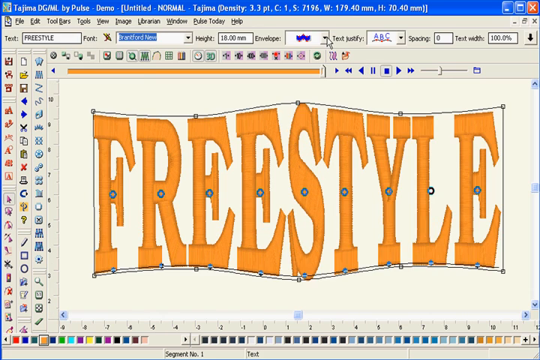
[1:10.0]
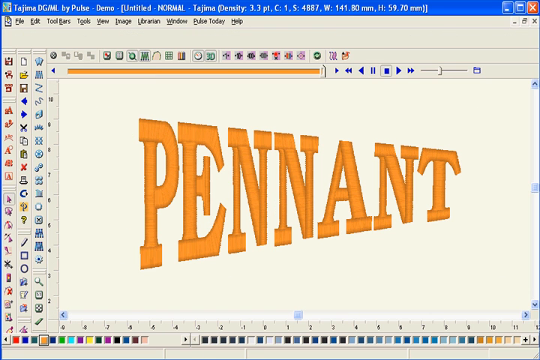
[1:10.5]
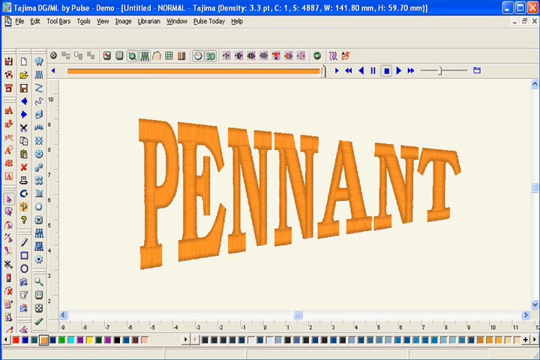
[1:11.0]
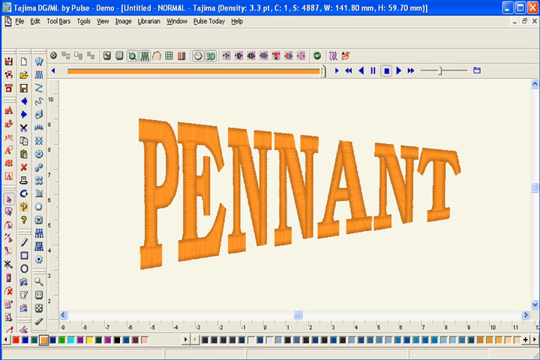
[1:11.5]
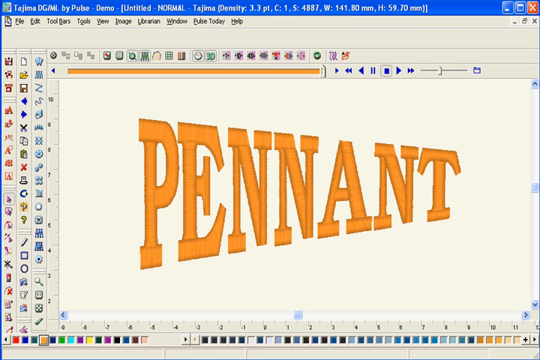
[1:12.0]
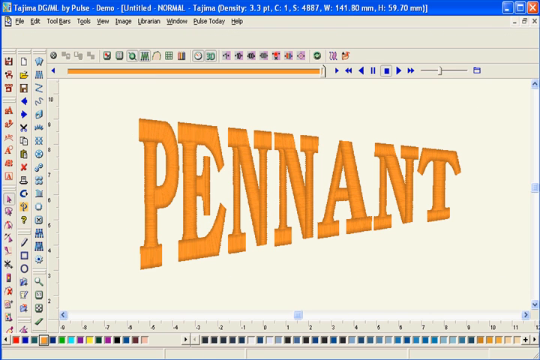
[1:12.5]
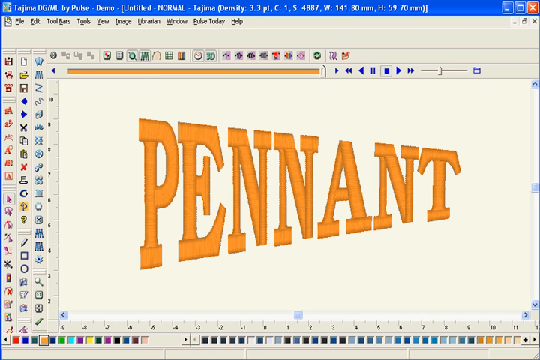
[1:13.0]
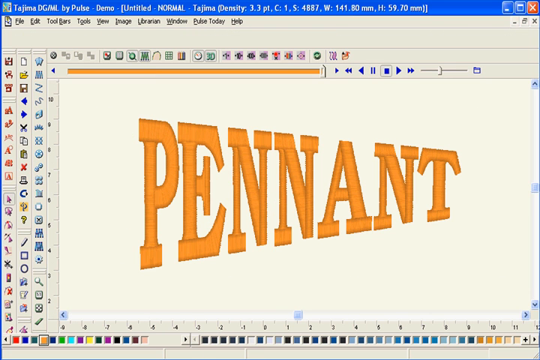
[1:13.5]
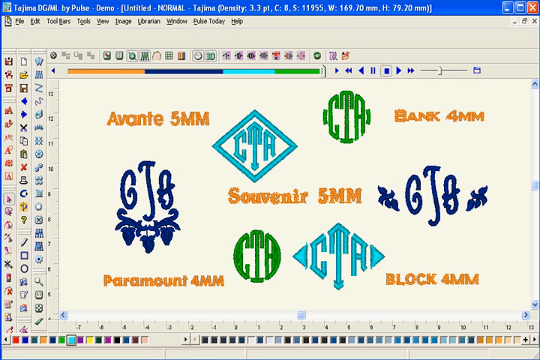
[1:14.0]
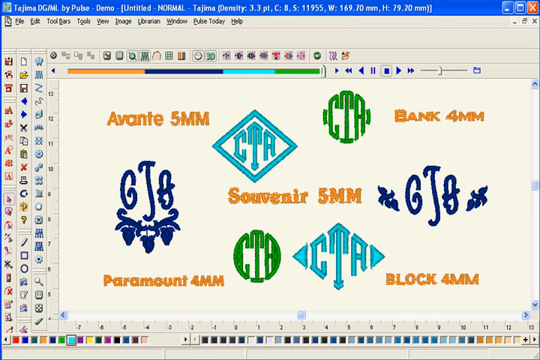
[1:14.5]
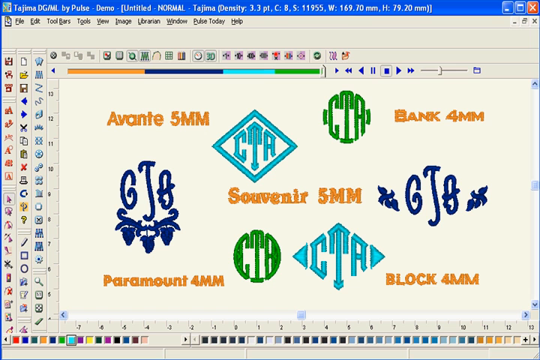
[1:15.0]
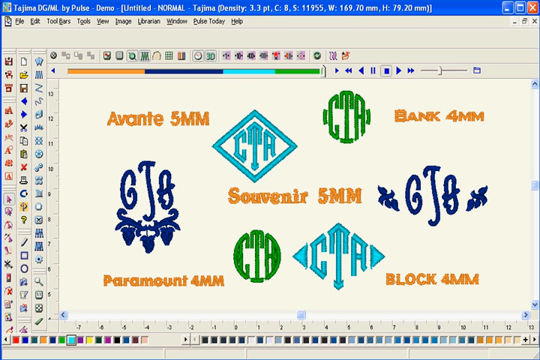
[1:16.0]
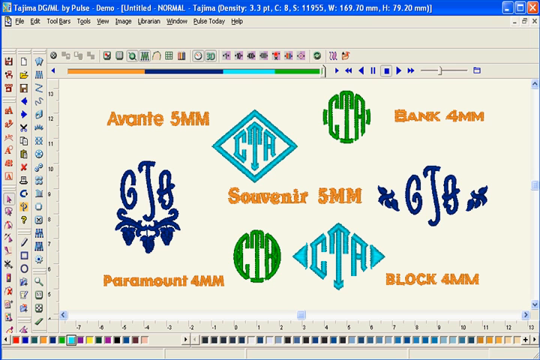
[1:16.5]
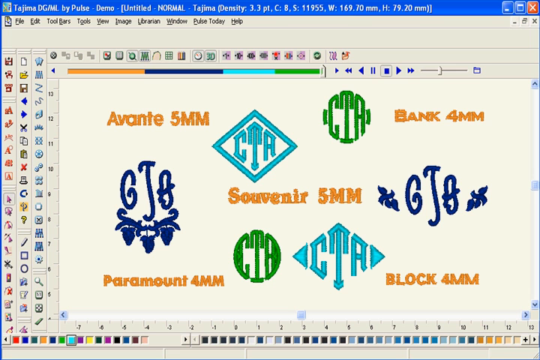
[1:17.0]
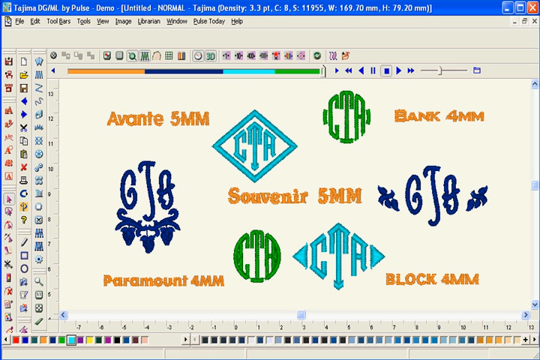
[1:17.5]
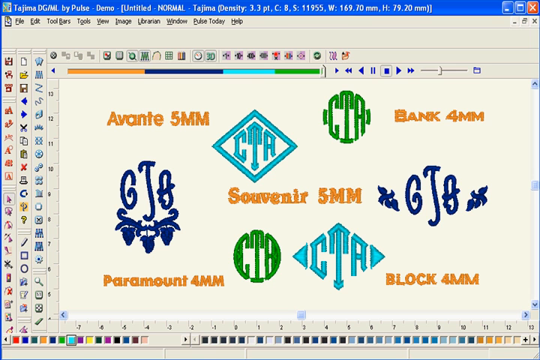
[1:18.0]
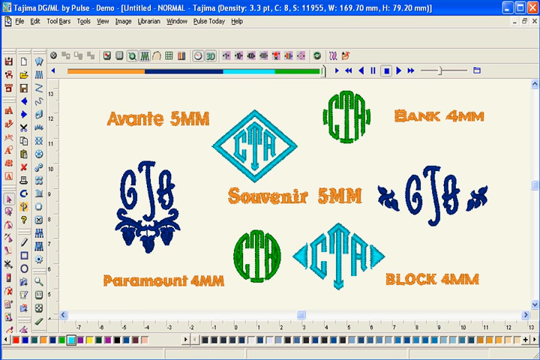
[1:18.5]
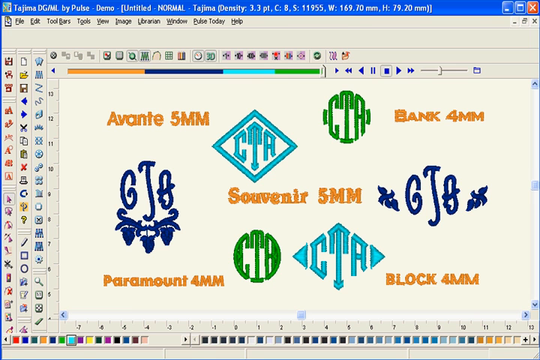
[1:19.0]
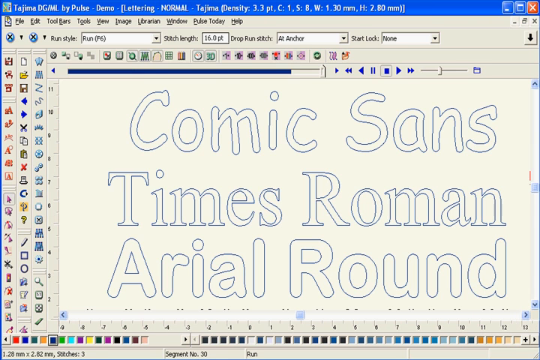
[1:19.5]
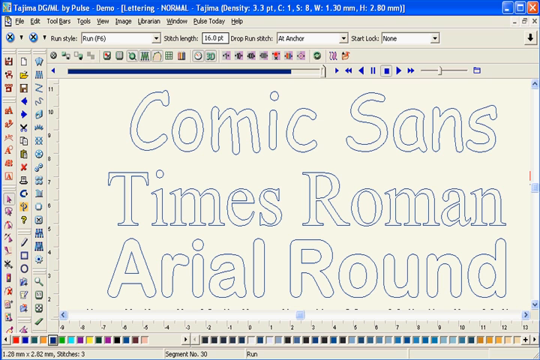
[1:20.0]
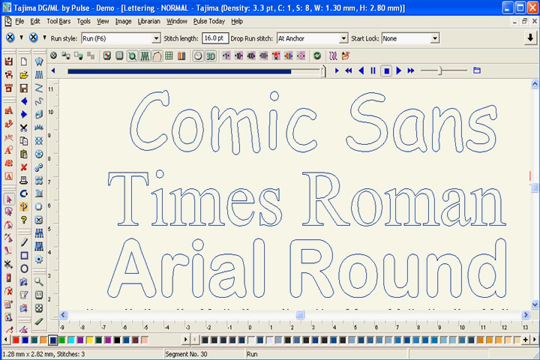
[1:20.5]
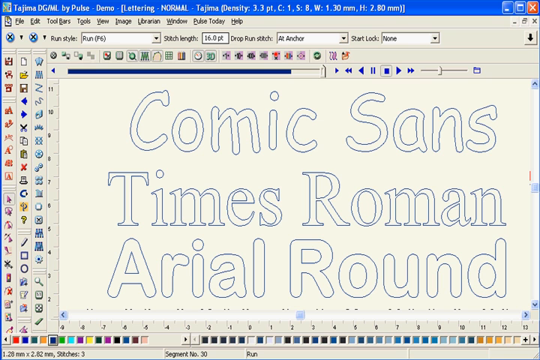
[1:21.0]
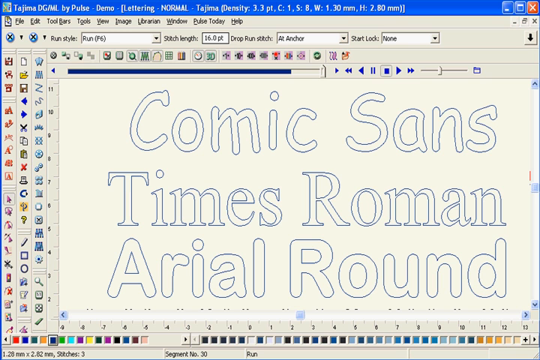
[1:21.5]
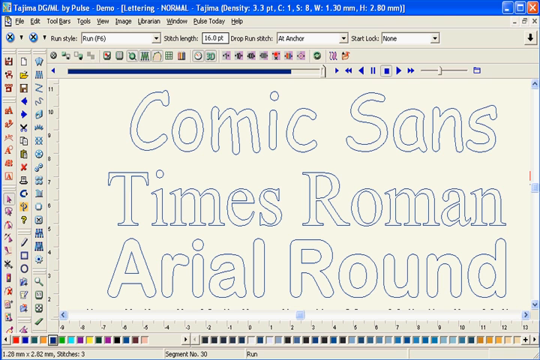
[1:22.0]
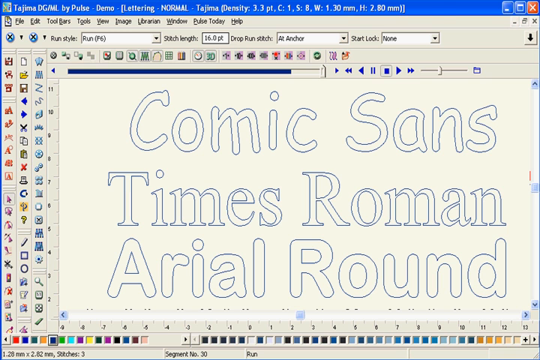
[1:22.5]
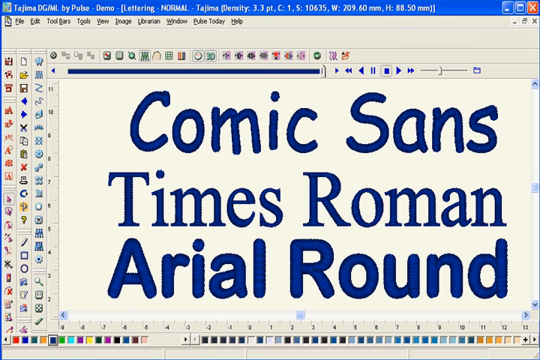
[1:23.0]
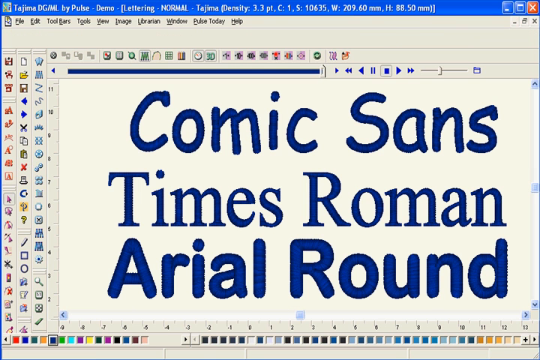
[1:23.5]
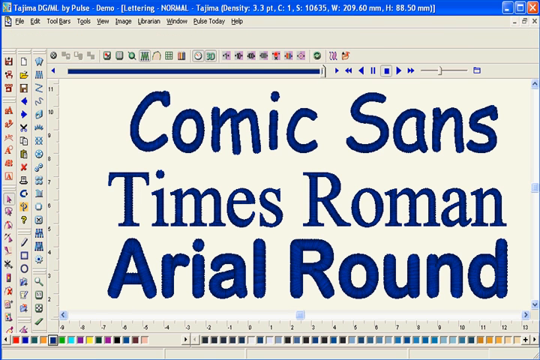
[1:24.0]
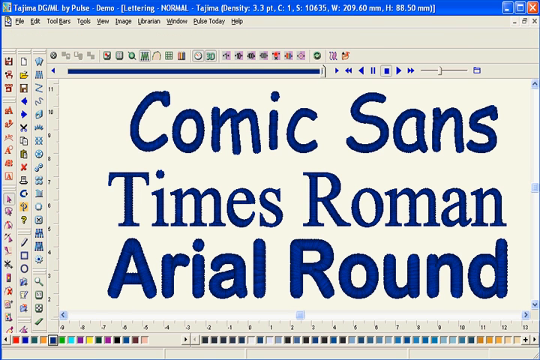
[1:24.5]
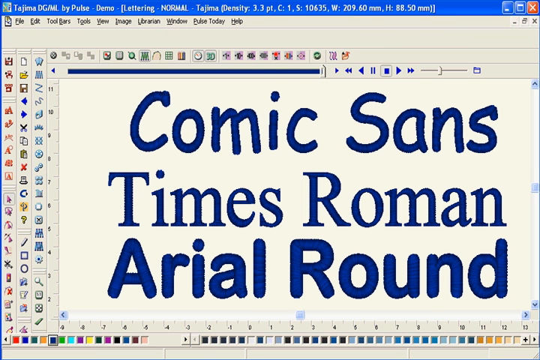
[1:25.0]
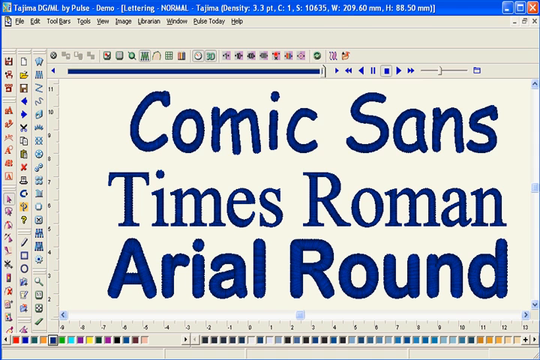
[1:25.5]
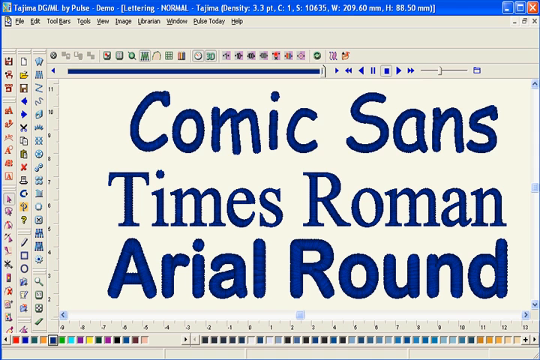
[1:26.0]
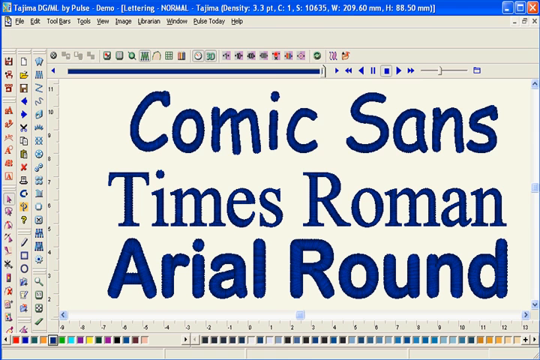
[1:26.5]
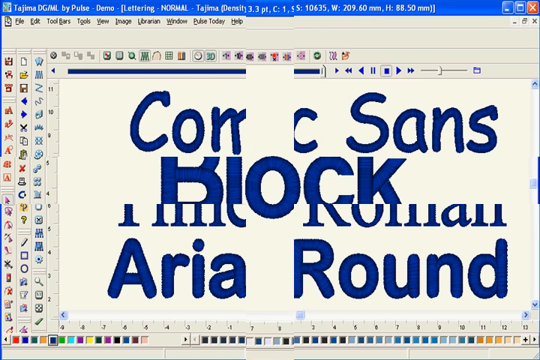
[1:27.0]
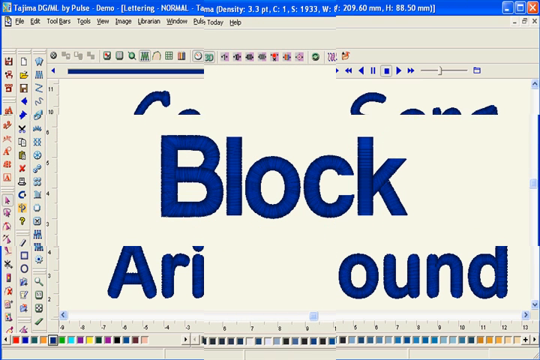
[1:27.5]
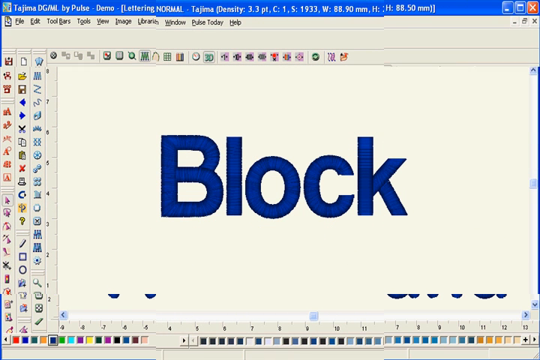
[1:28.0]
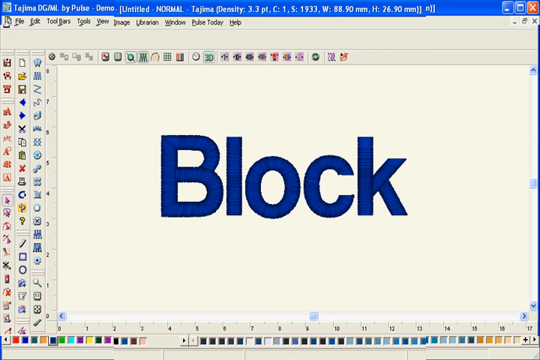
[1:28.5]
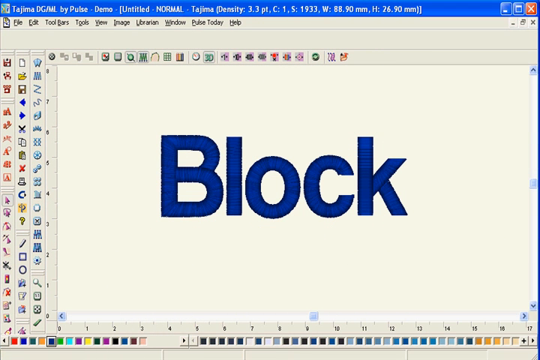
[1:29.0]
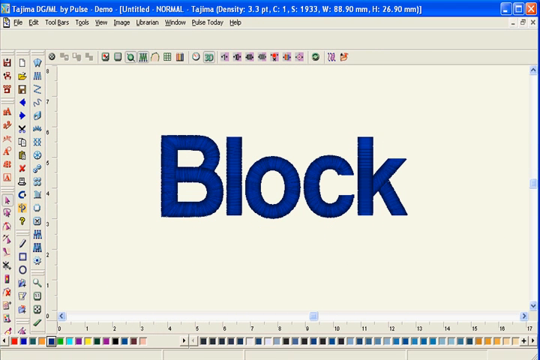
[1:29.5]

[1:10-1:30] A computer program displays many different styles and fonts for embroidery, with text reading "lettering" and "Tajama, DG, DM." The screen says "freestyle," where the S in "style" and the second E in "free" are slightly bigger while the other letters are similar in size. Next, "pennant" appears, shaped like a pennant that would hang on a wall. A page then lists "Avante 5MM," "Souvenir 5MM," "Bank 4MM," and "Paramount 4MM" in the lower left corner, with "Black 4MM" in the lower right corner. Then an outline font appears on what looks like a plain beige background, with outlines spelling "Comic Sans," "Times Roman," and "Arial Round"; these are filled in so the outlines become solid lines. The view then zooms out to show the word "block" in black letters.